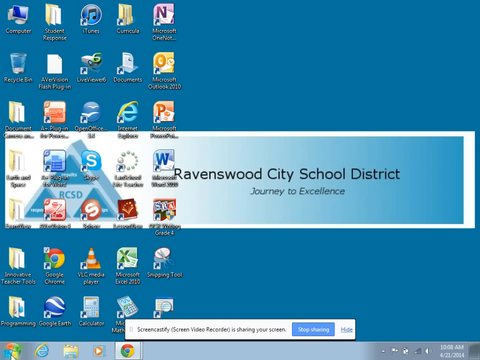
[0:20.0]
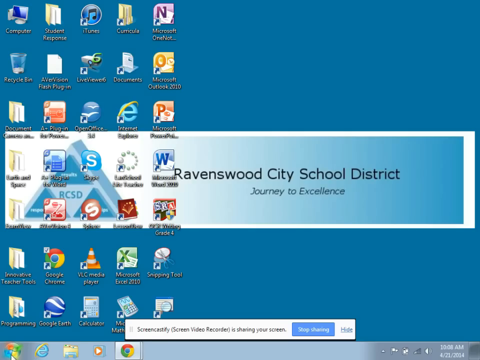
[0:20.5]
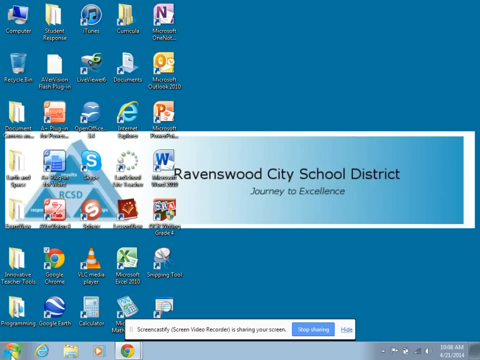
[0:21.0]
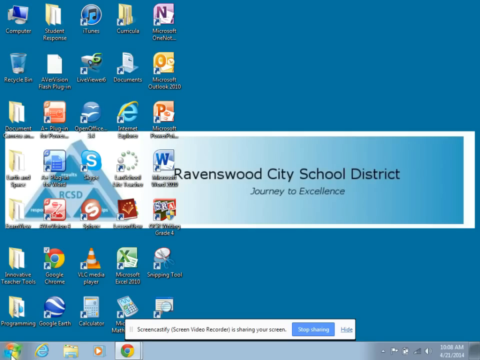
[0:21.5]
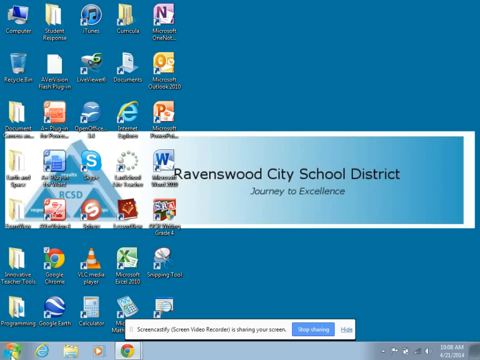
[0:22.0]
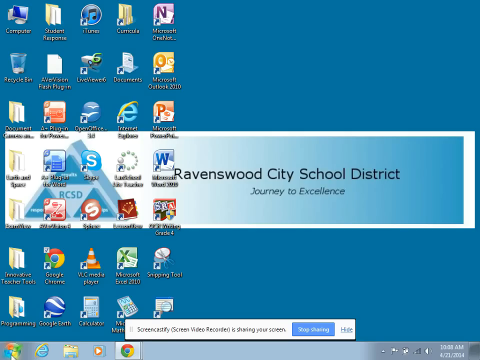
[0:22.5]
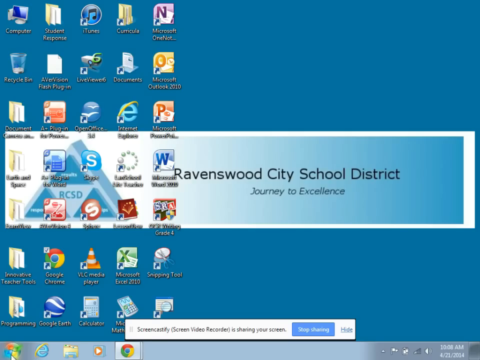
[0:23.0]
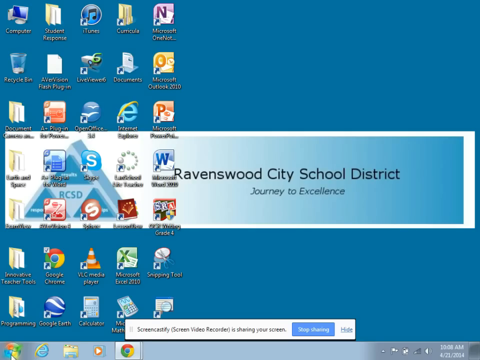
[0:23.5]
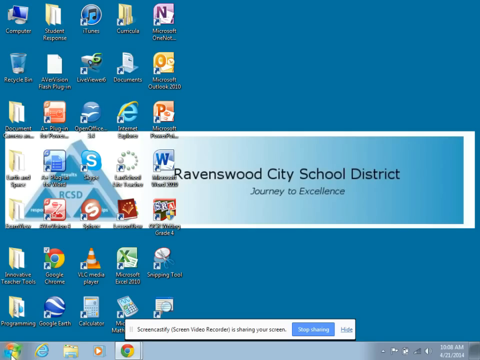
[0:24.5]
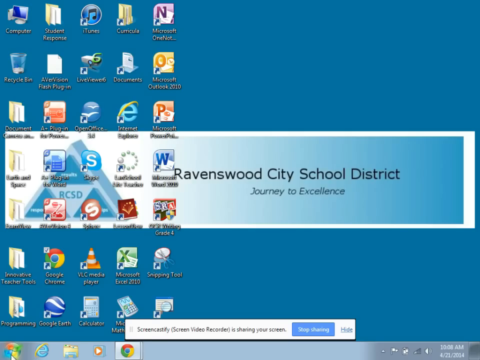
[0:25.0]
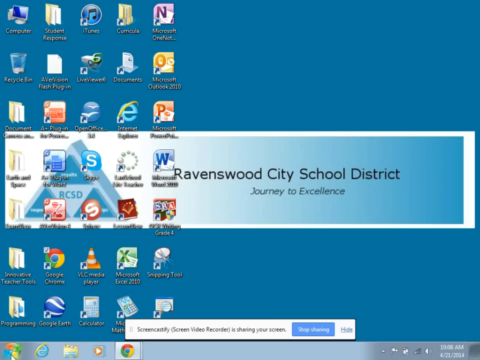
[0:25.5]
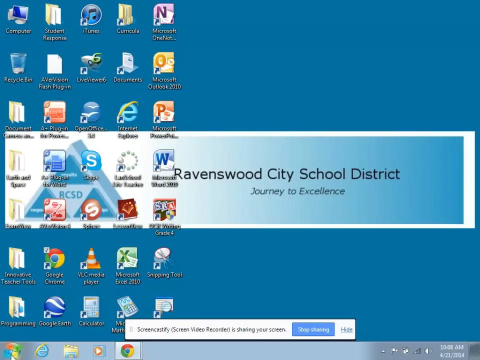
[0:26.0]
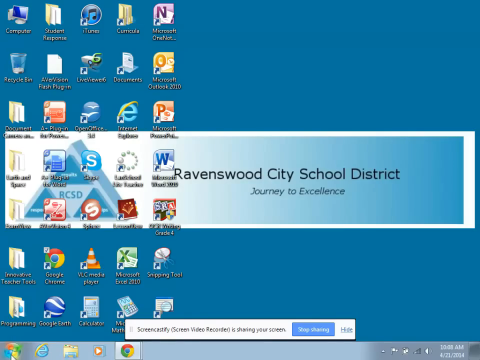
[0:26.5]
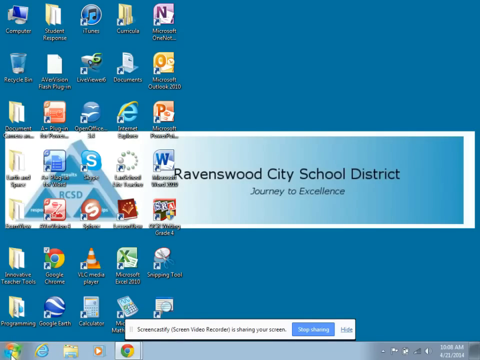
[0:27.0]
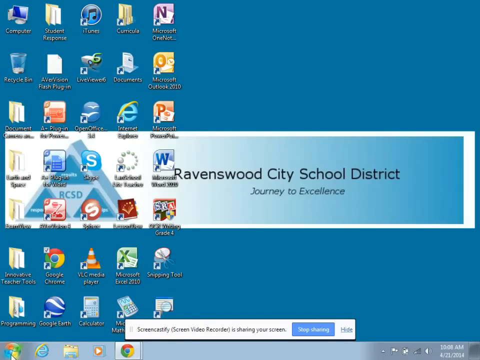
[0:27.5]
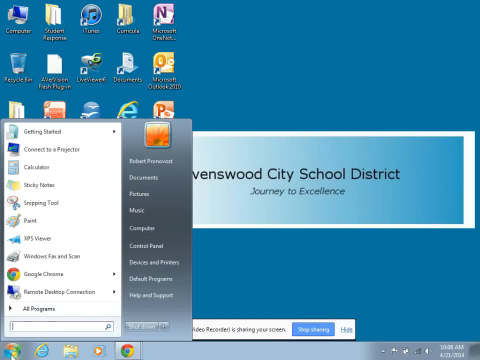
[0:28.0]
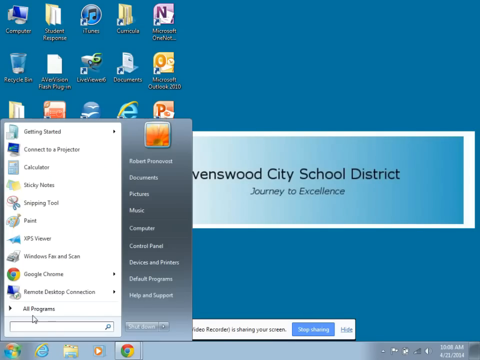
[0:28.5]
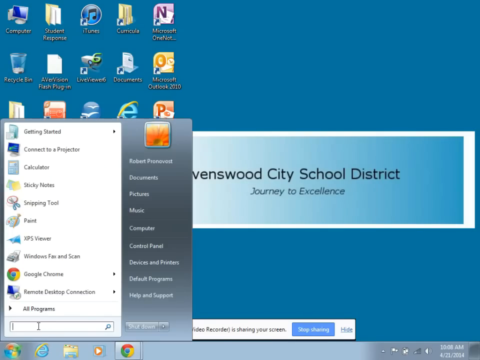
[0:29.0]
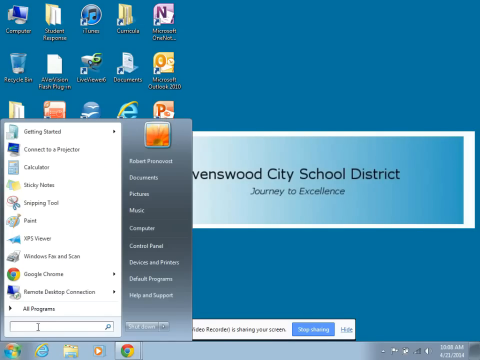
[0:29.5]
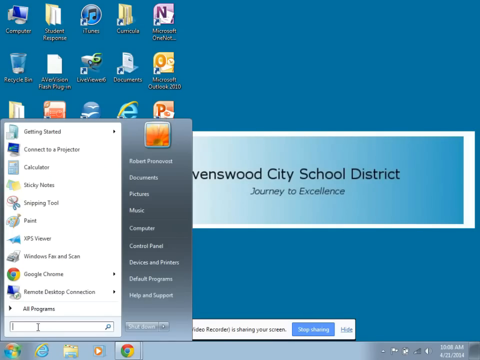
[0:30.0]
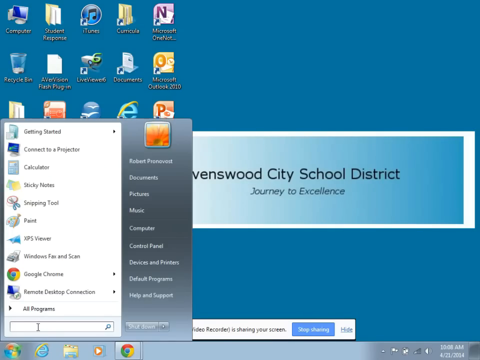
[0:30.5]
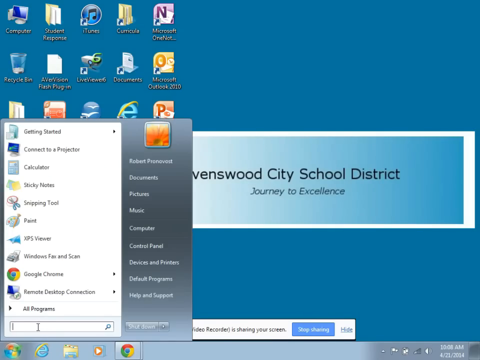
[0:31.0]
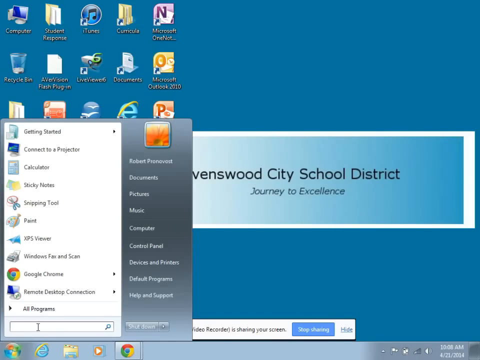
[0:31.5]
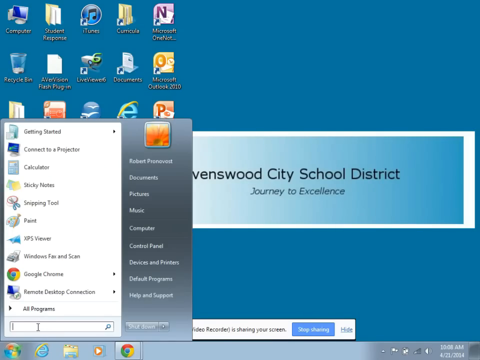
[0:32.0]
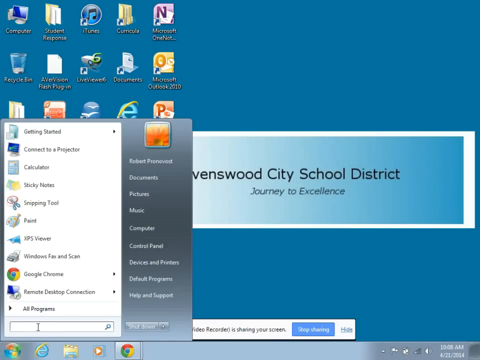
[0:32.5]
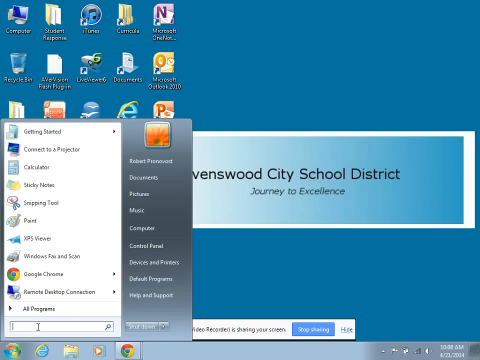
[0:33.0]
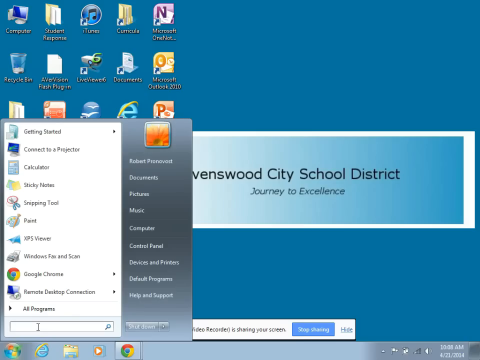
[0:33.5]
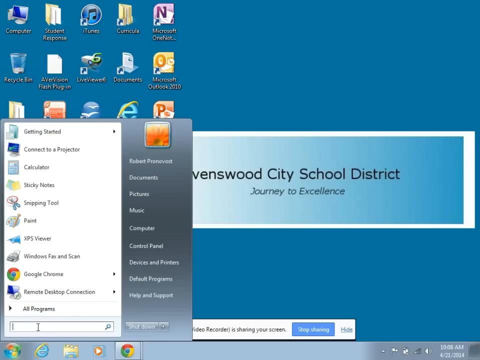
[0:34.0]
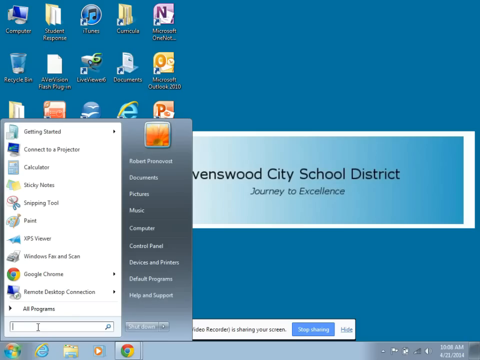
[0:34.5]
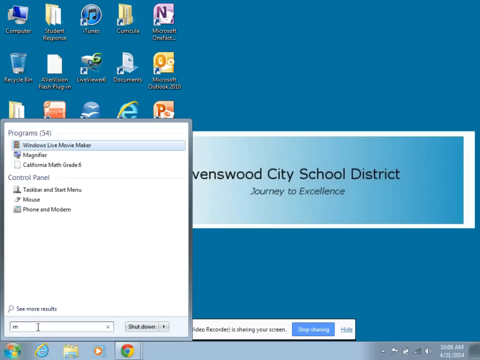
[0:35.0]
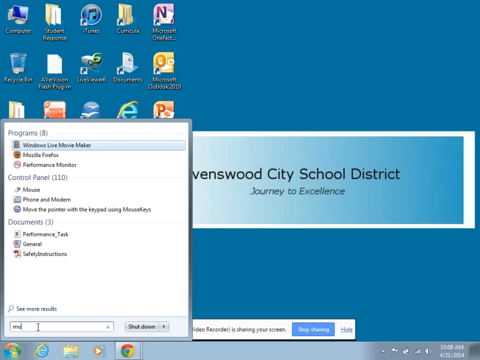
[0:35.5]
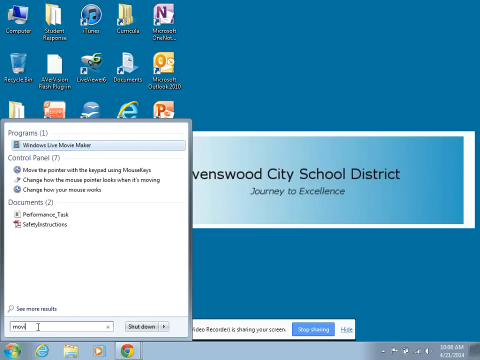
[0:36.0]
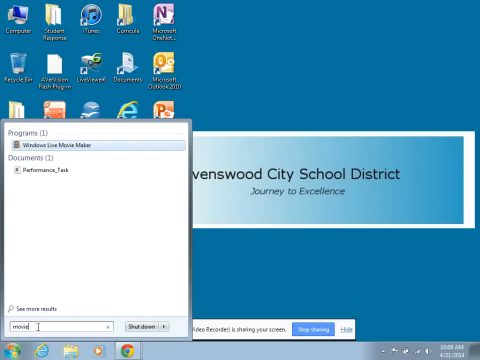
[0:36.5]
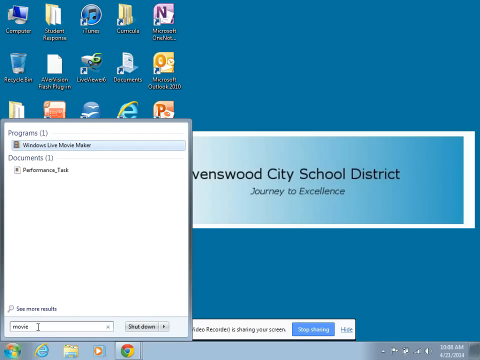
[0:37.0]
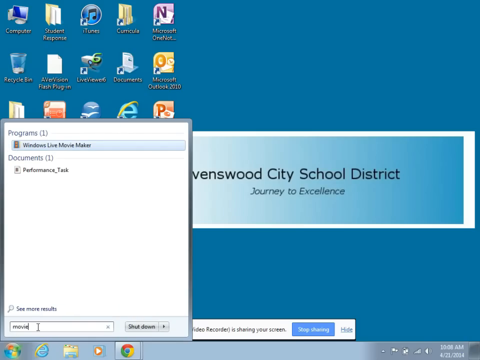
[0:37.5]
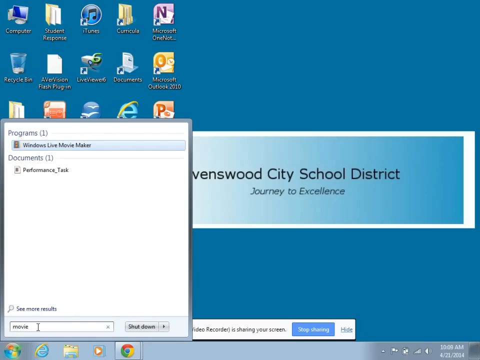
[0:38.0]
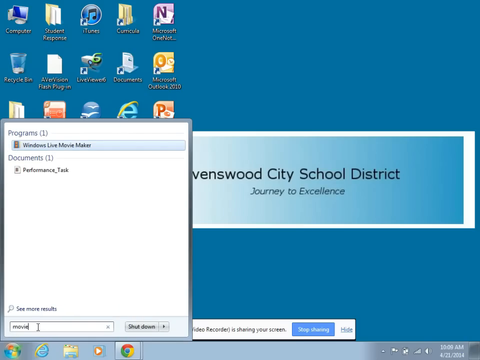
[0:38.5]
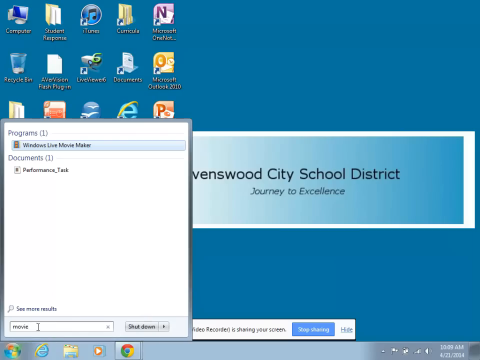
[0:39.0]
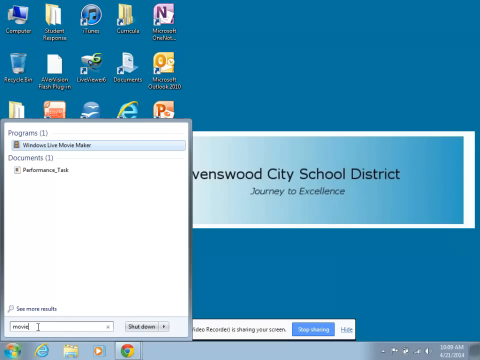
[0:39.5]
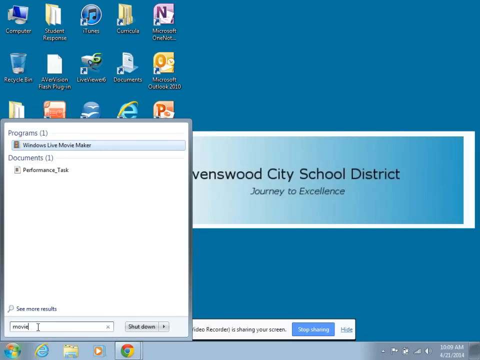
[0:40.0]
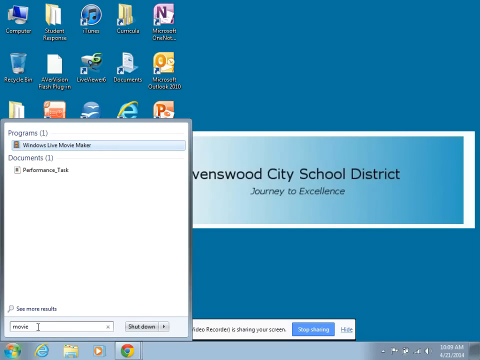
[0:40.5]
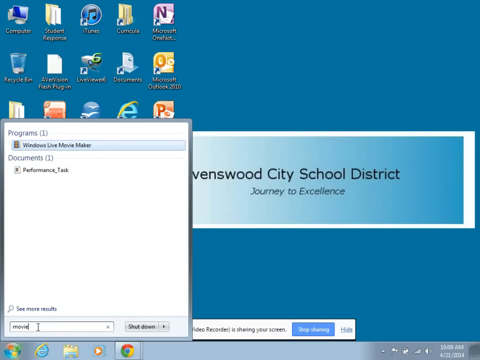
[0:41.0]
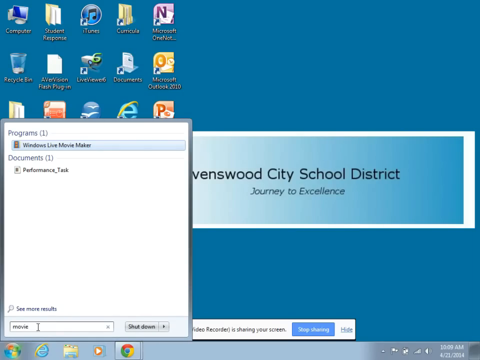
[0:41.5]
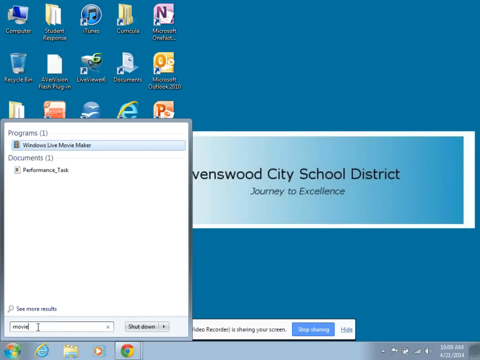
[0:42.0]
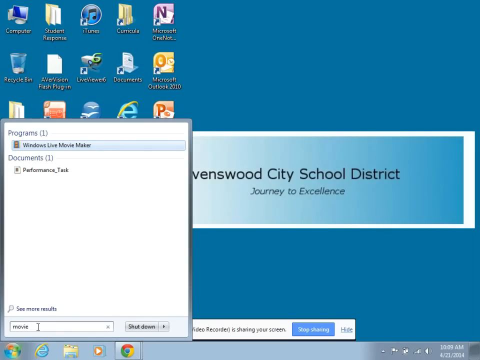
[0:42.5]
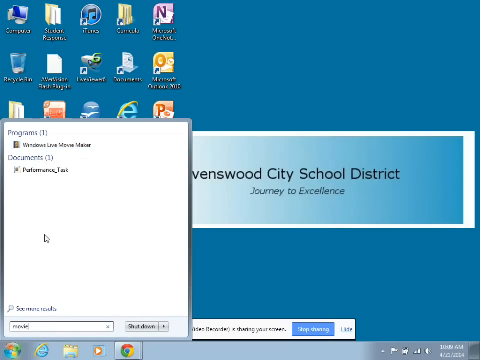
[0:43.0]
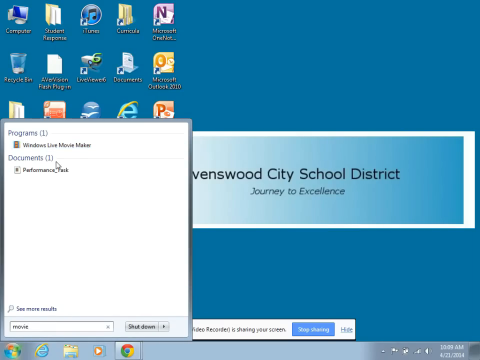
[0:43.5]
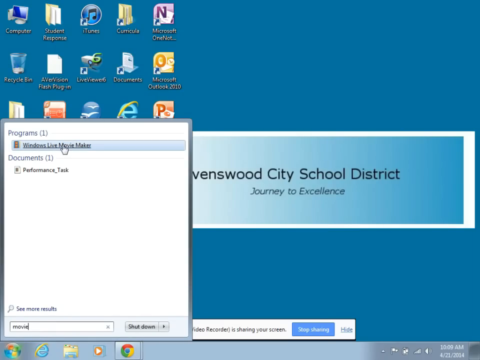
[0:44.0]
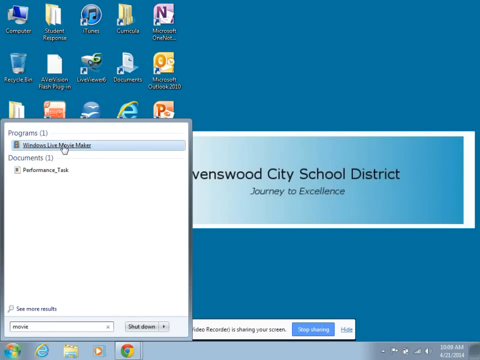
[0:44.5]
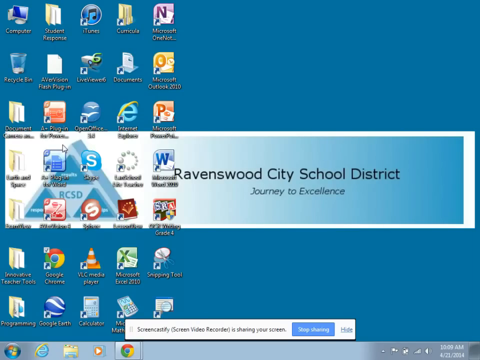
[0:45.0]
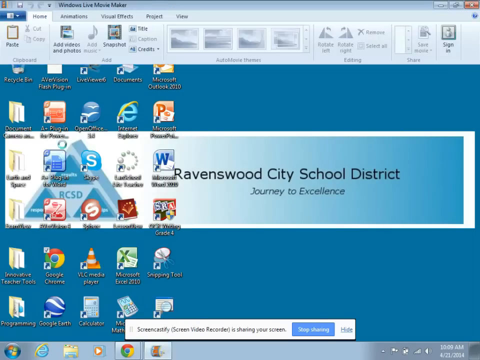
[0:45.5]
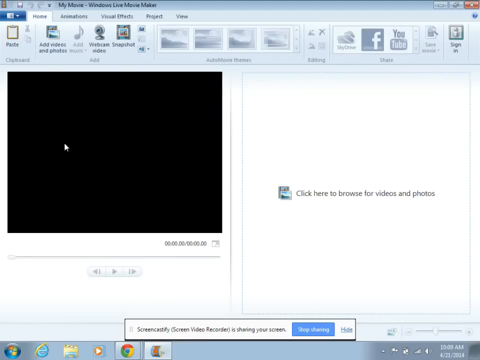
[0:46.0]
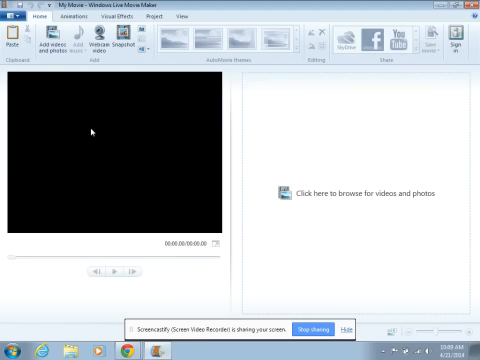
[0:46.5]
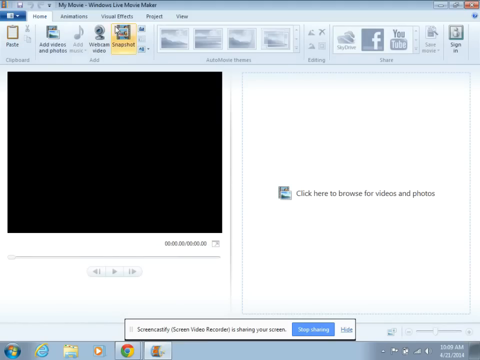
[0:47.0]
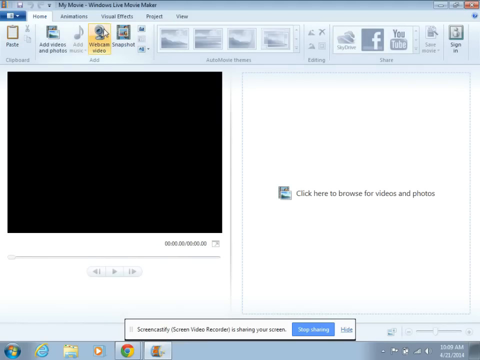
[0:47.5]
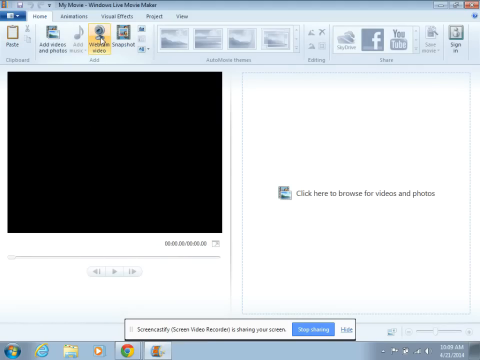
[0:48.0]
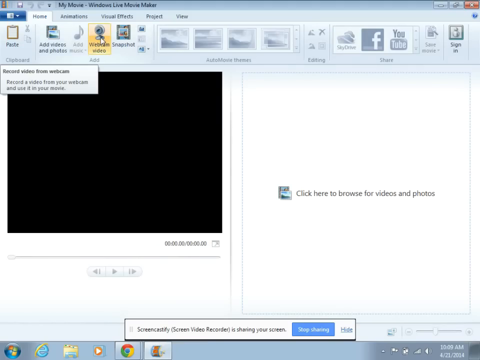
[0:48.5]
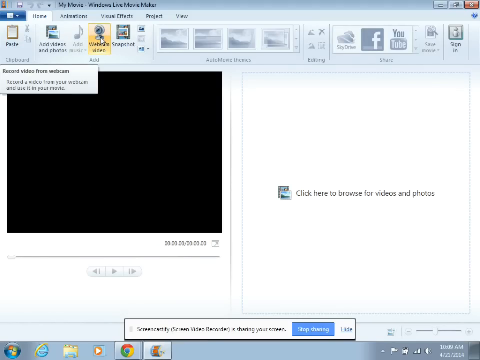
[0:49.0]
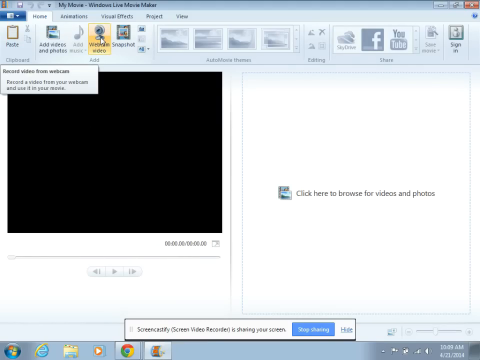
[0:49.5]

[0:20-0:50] The home screen is shown with no captions or explanations while the person waits before doing anything on the computer. After some time, the person clicks to open the start menu and searches for Windows Live Movie Maker. When the search results appear, the person clicks on the Windows Live Movie Maker application and the program opens on the screen. The screen stays open on the application for a while.